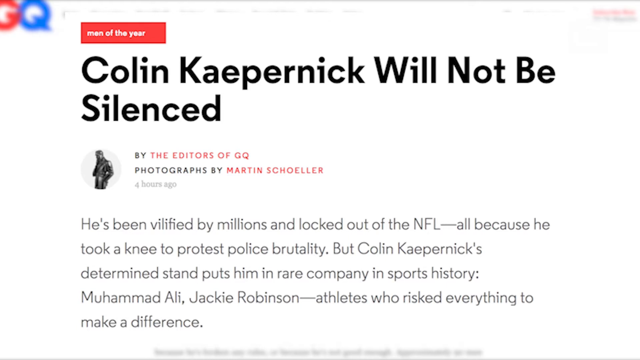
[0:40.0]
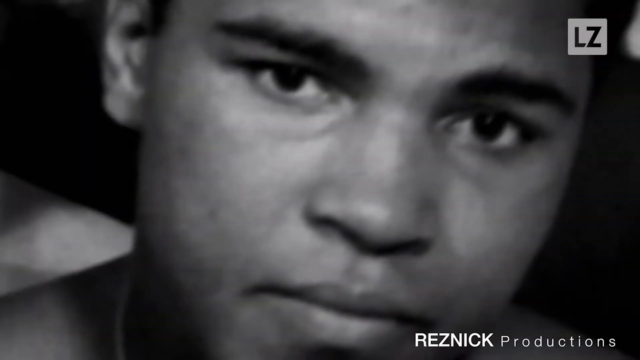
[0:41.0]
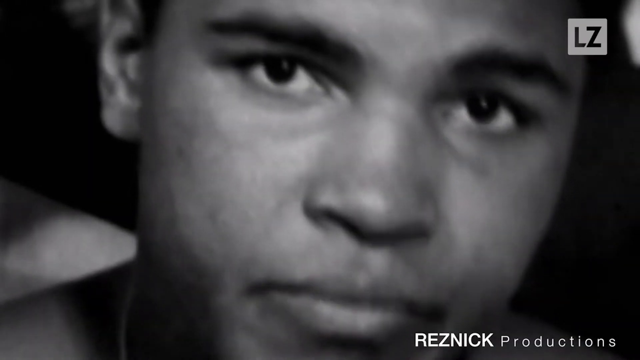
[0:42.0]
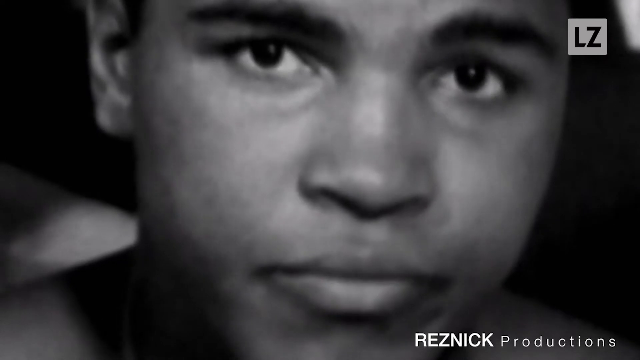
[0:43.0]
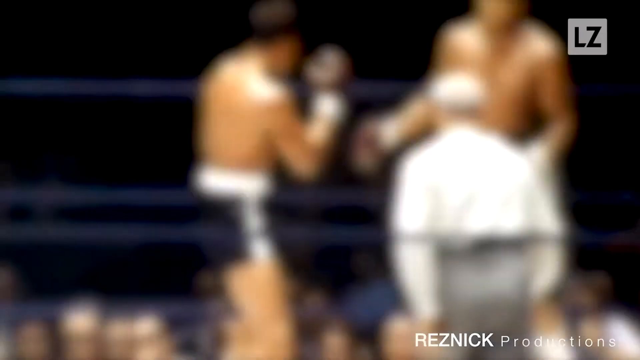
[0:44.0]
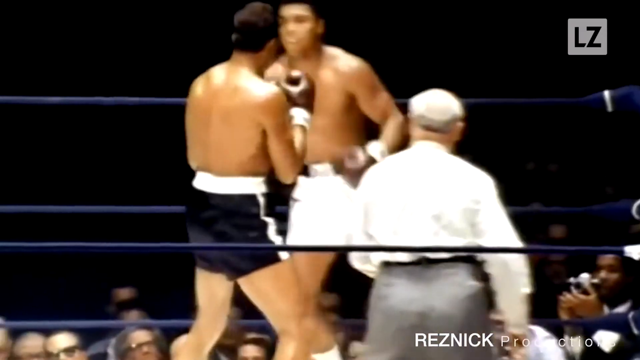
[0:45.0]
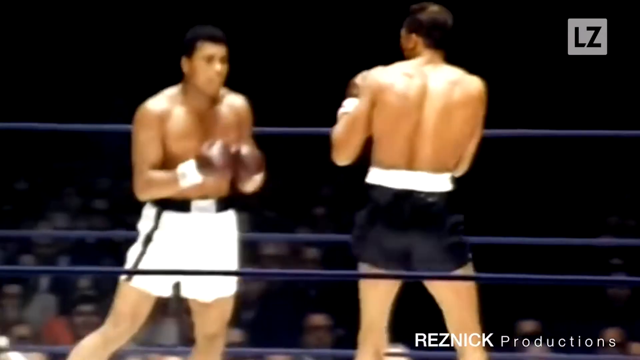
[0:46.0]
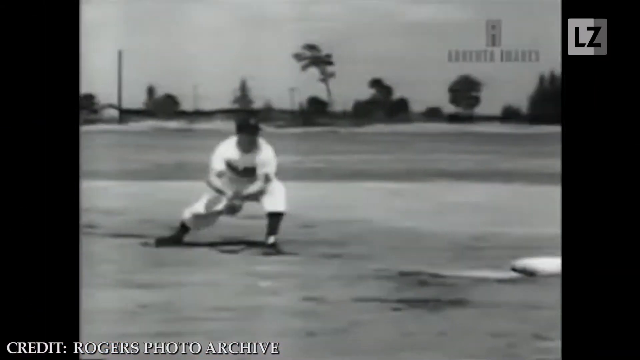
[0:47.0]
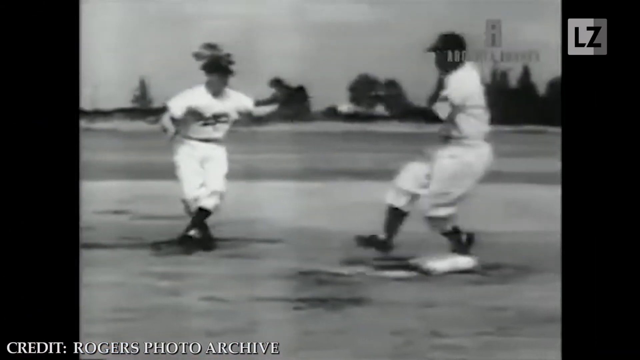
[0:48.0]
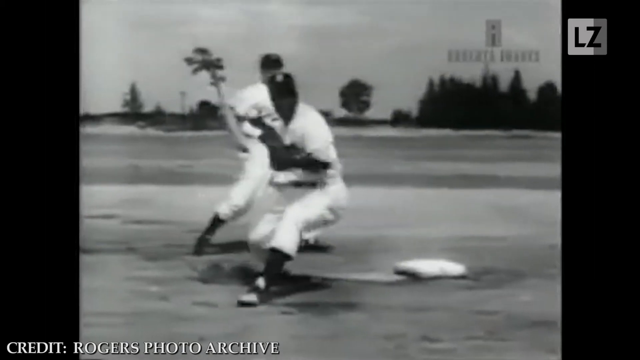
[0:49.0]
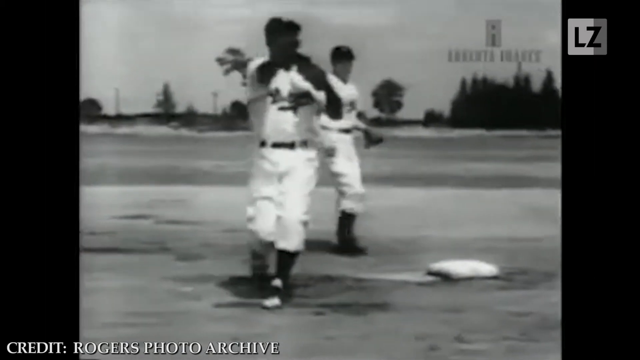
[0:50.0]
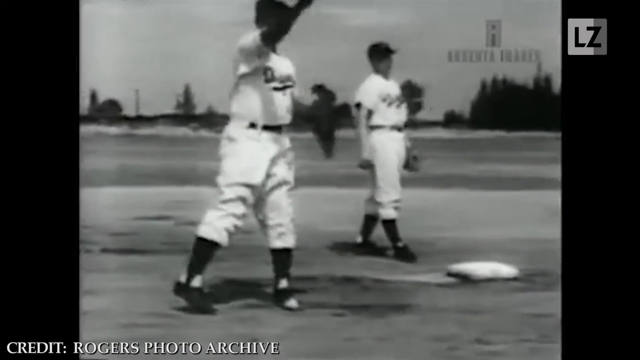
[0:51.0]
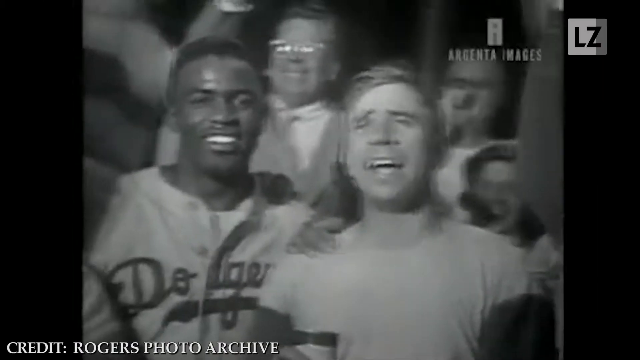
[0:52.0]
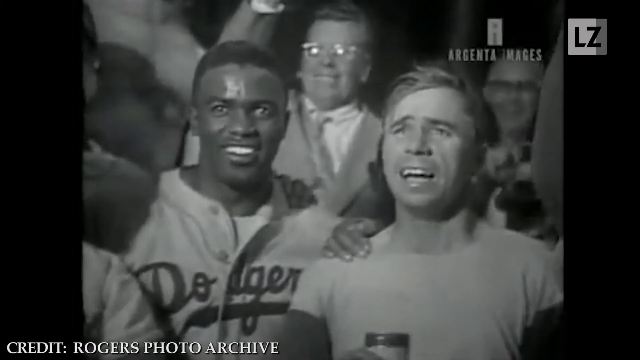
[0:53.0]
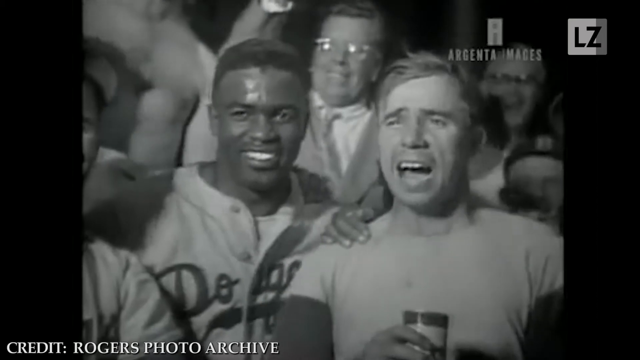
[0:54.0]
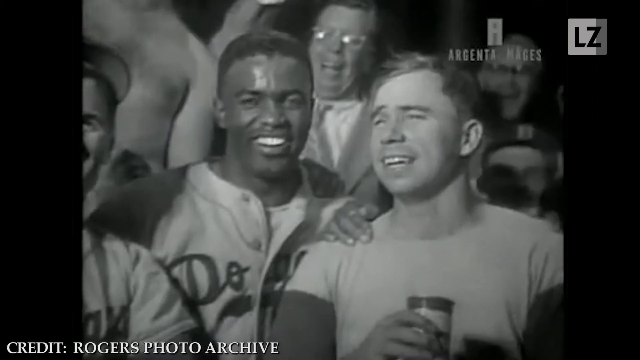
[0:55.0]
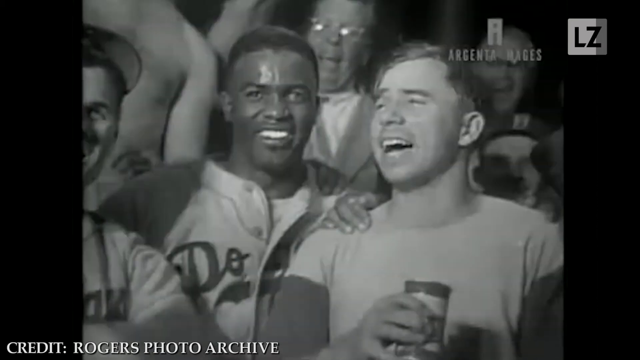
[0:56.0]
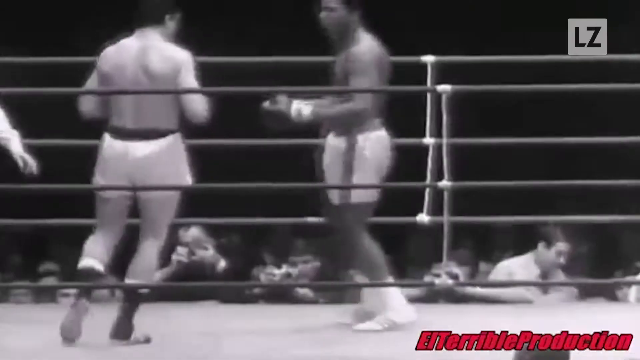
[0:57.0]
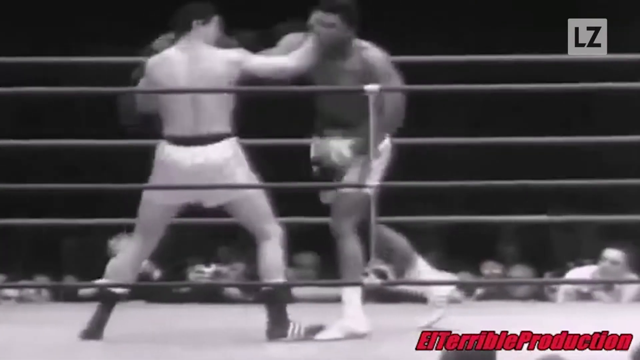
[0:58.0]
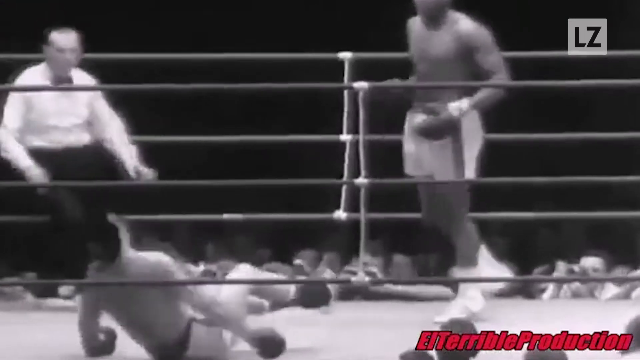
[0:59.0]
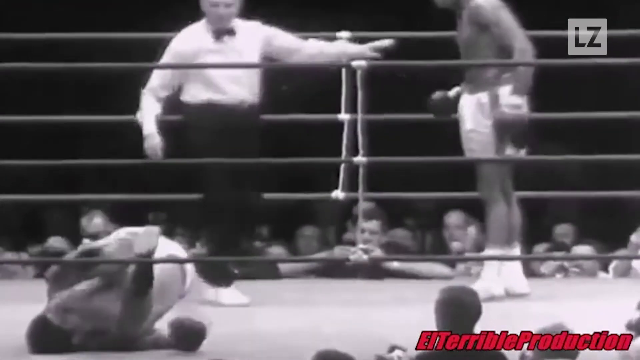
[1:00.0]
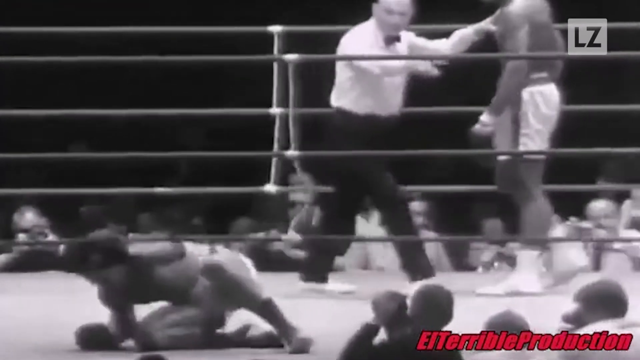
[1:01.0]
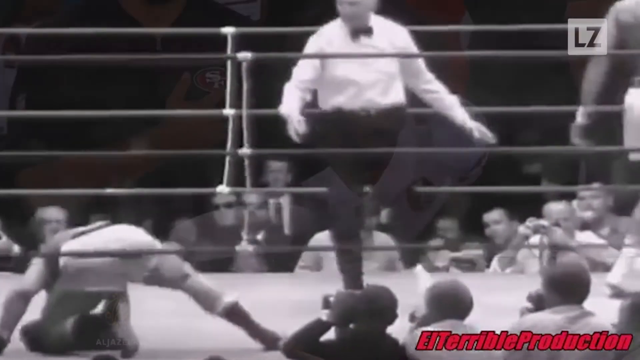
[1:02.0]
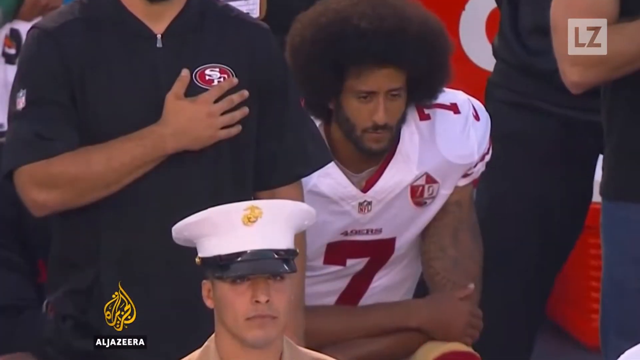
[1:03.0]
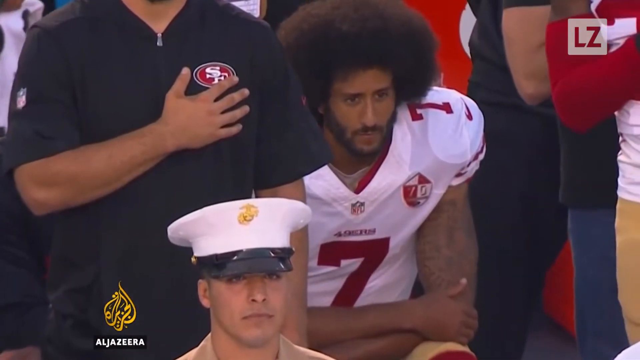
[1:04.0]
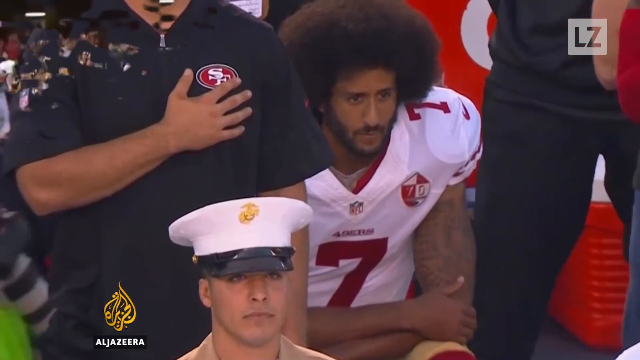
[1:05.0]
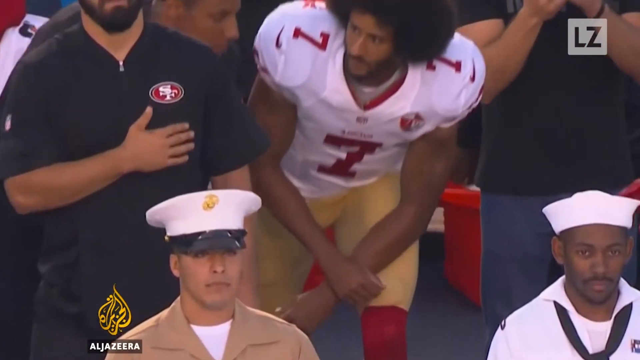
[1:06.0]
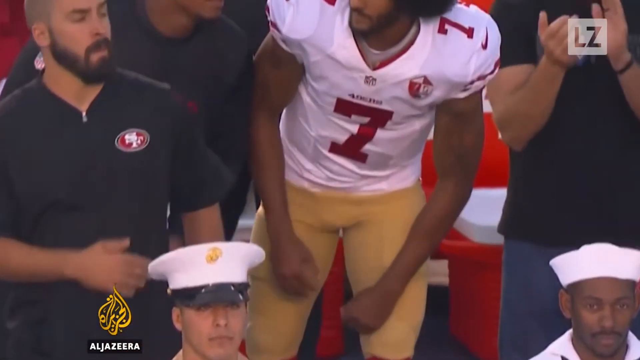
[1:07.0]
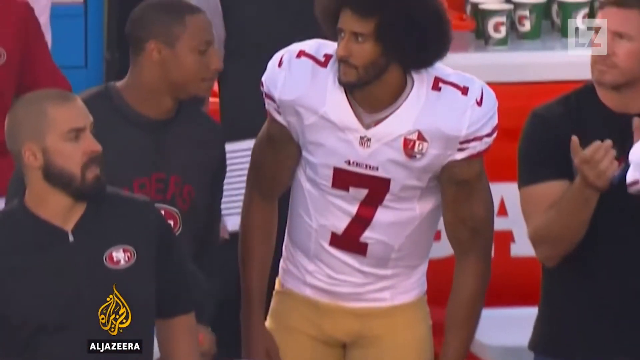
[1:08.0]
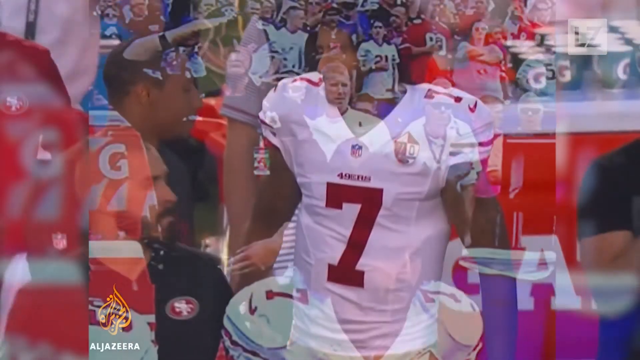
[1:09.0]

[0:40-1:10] A news snippet reads "Colin Kaepernick will not be silenced", along with some further written information. Black-and-white footage shows a young Muhammad Ali, followed by a clip of him boxing. Black-and-white clips of Jackie Robbins follow, including him playing baseball and a shot of him smiling with a crowd. The footage returns to a boxing match with Muhammad Ali, culminating in him knocking down his opponent. Colin Kaepernick is then shown on the field kneeling during the national anthem, with a logo visible in the bottom left corner of the screen. A police officer in front of him wears a white cap and a khaki uniform. The men to Kaepernick's side hold their chests as they sing the national anthem, and the police officer standing near is seen saluting while Kaepernick is still kneeling. They are on a rugby ground.